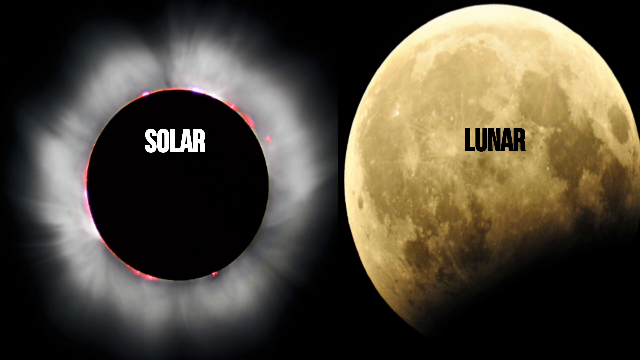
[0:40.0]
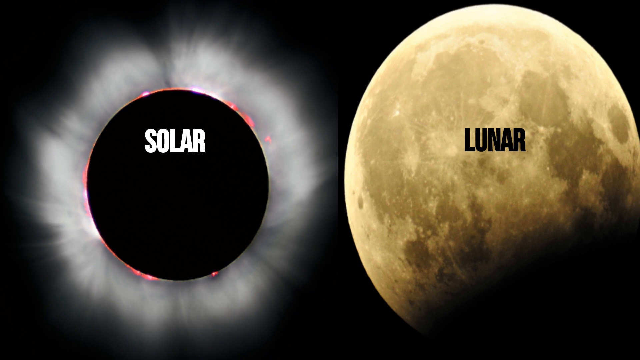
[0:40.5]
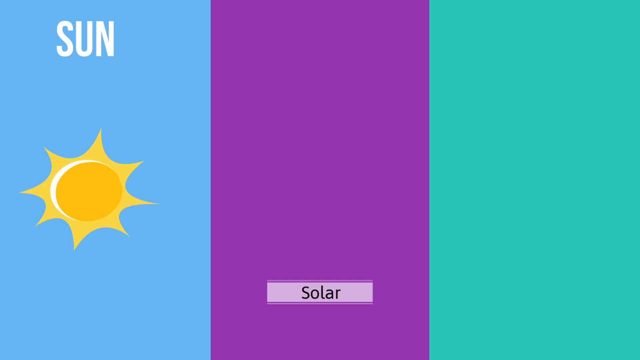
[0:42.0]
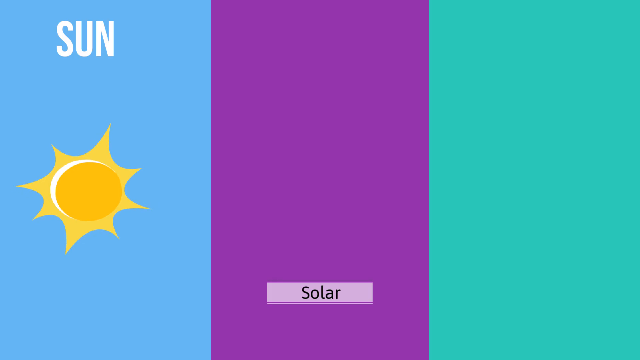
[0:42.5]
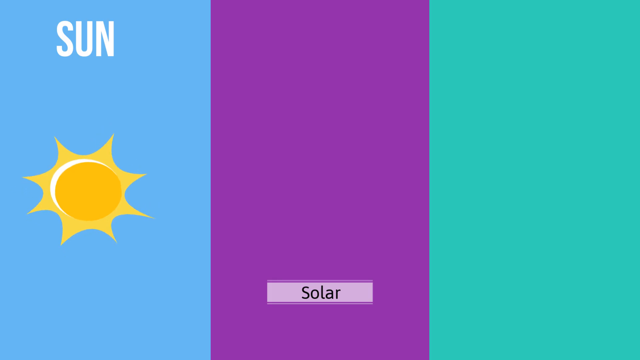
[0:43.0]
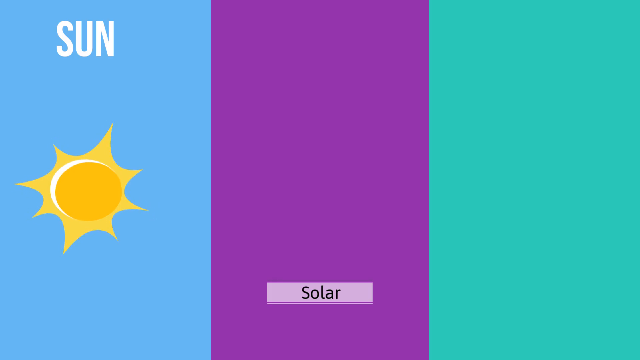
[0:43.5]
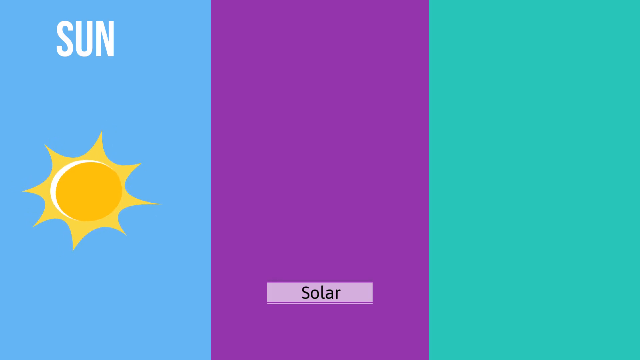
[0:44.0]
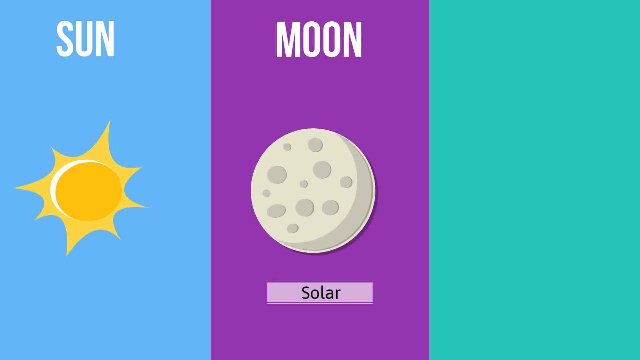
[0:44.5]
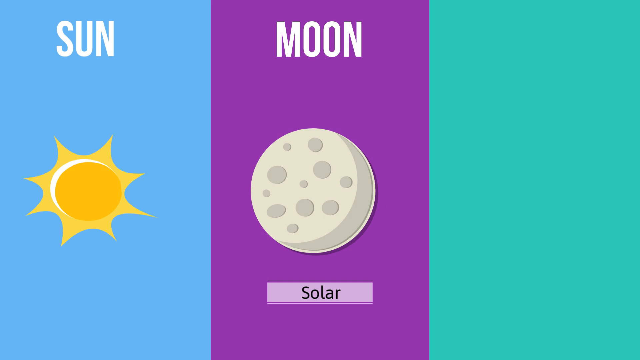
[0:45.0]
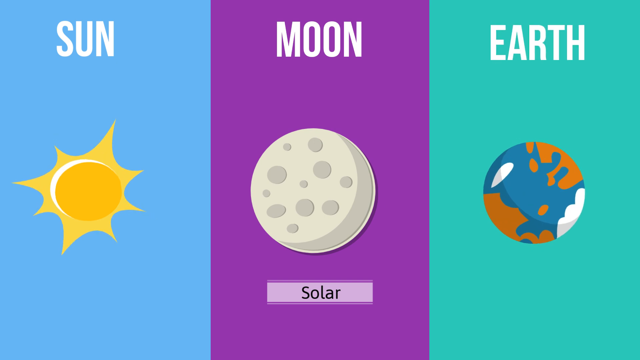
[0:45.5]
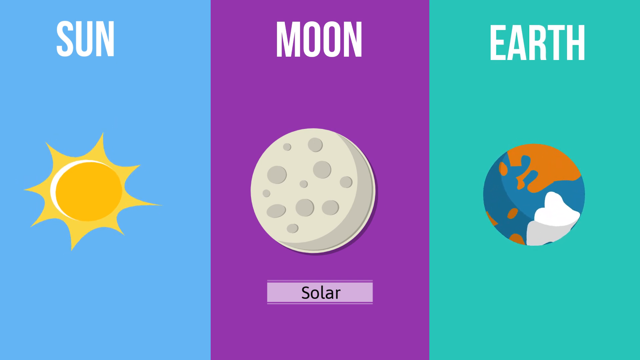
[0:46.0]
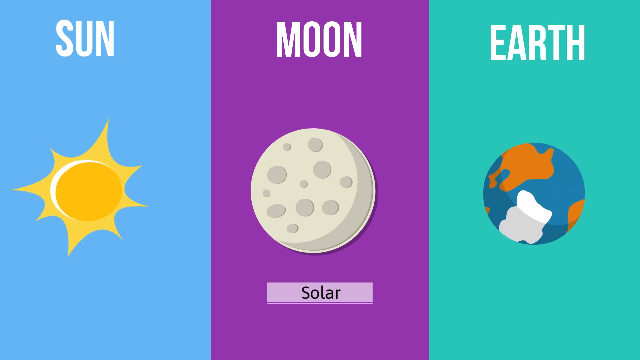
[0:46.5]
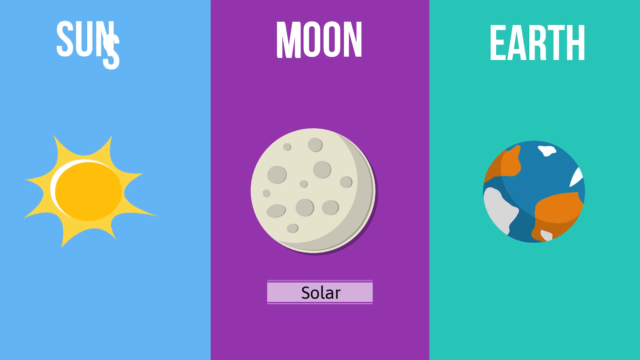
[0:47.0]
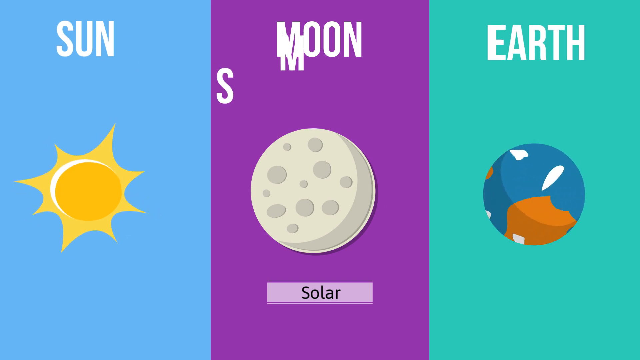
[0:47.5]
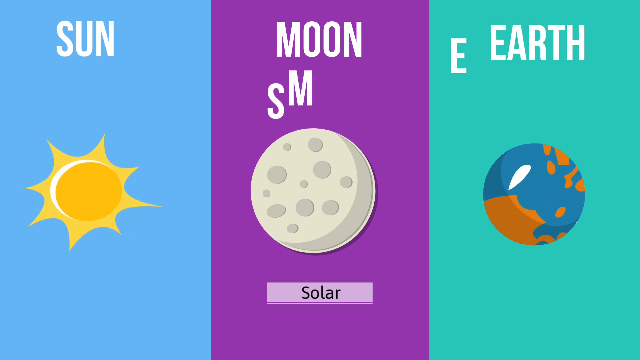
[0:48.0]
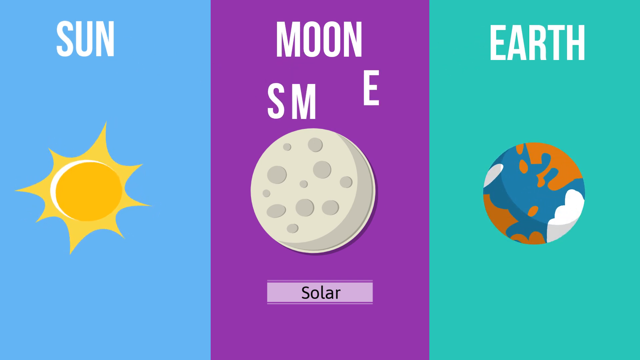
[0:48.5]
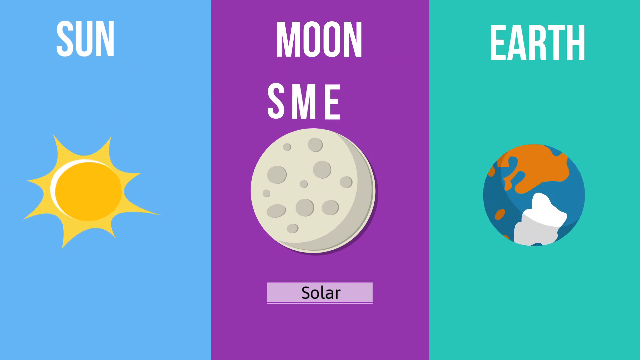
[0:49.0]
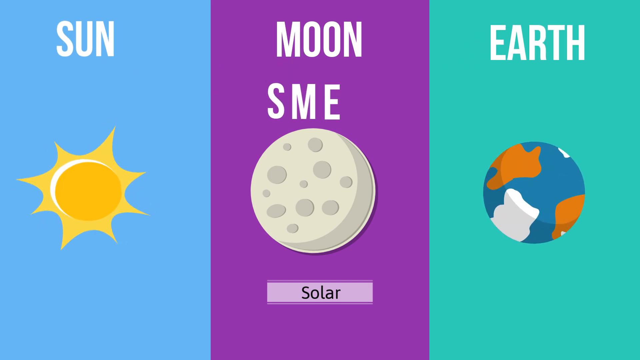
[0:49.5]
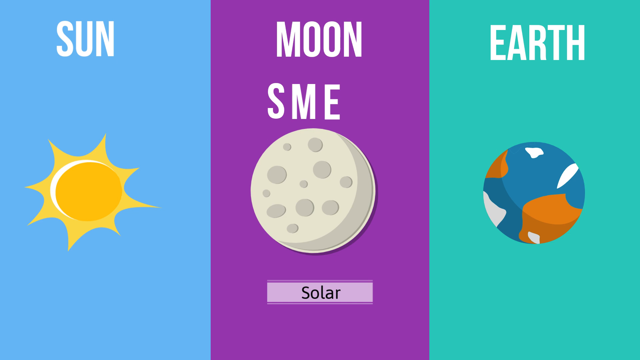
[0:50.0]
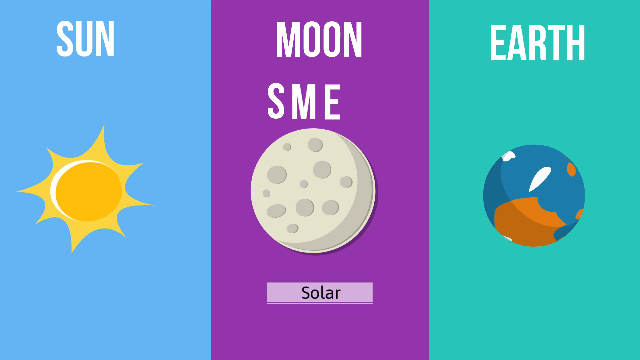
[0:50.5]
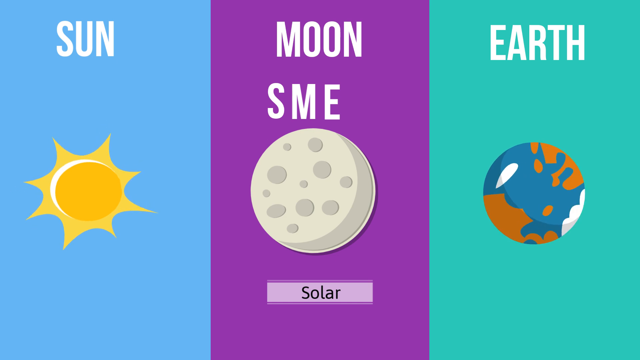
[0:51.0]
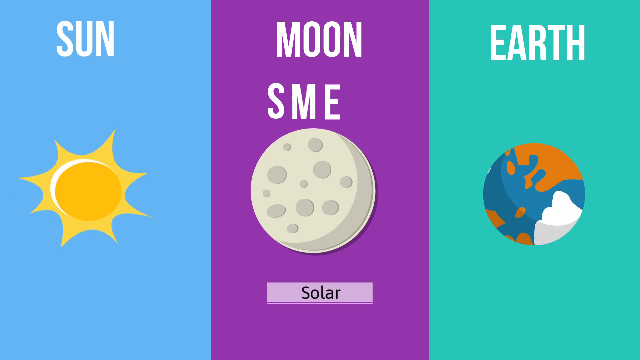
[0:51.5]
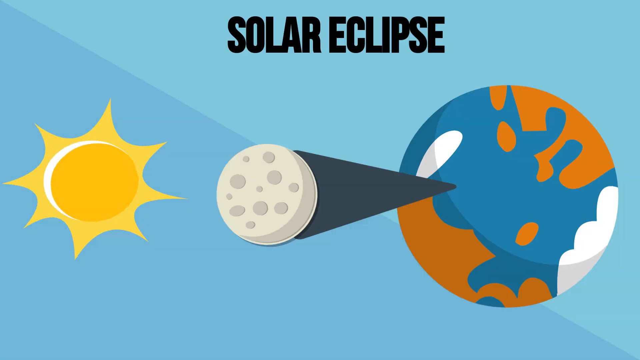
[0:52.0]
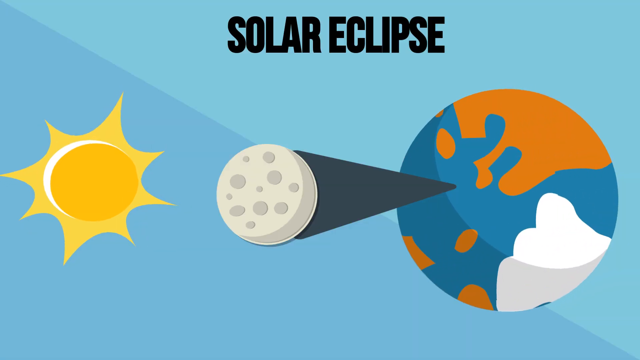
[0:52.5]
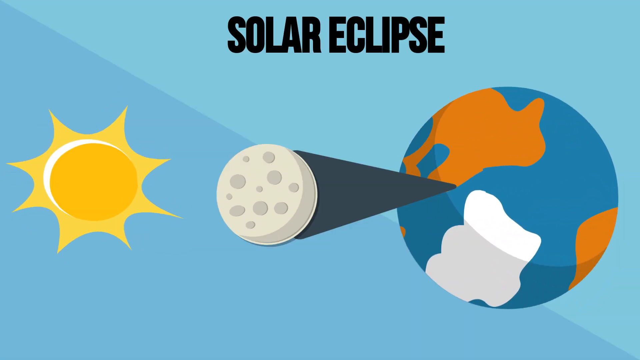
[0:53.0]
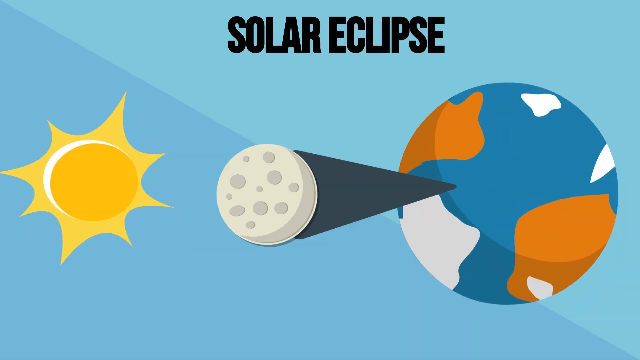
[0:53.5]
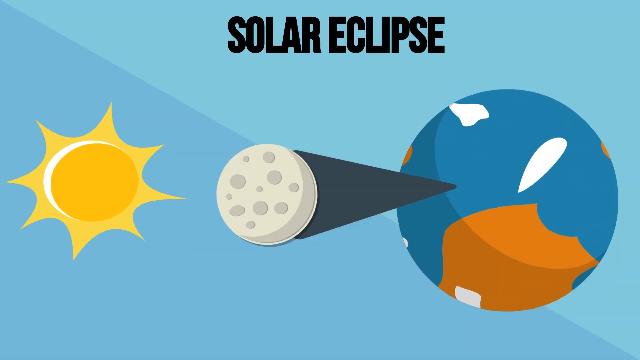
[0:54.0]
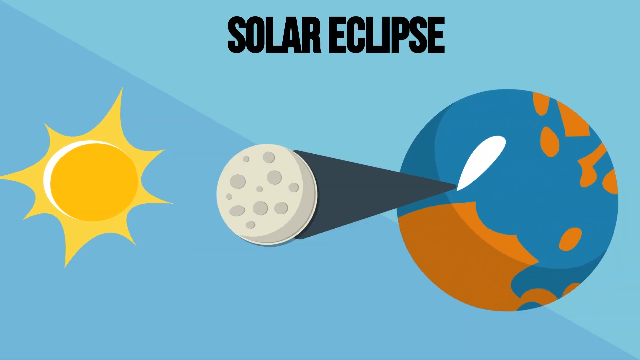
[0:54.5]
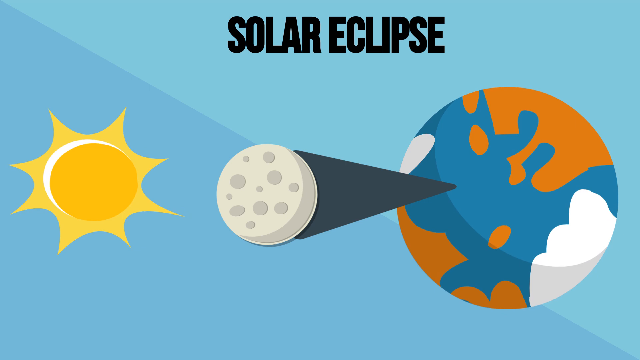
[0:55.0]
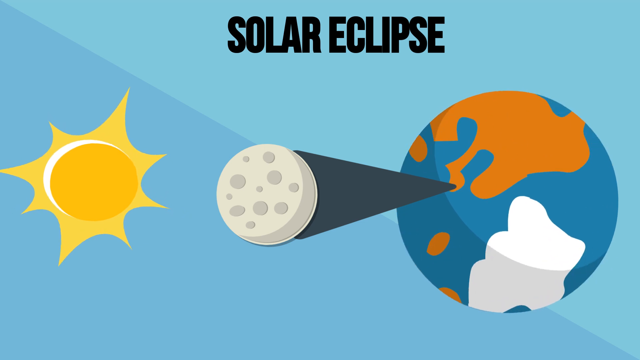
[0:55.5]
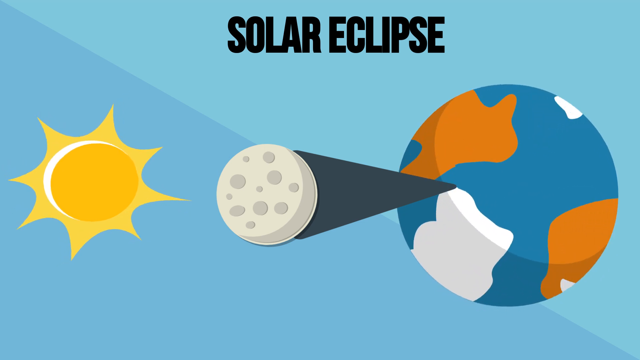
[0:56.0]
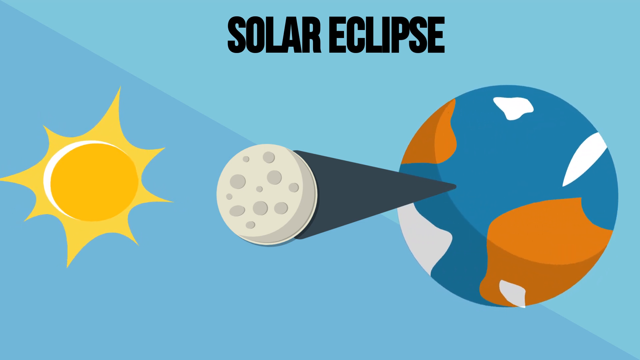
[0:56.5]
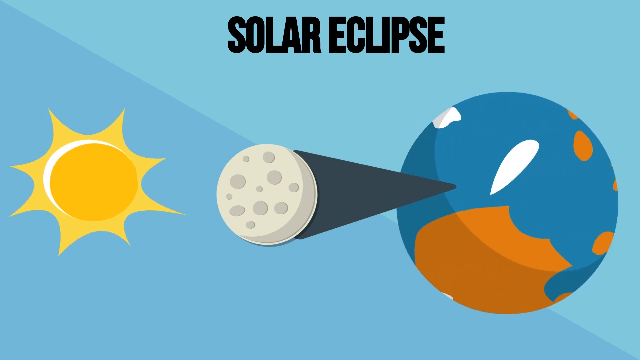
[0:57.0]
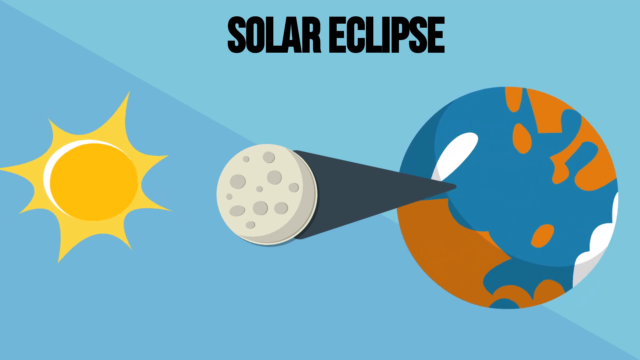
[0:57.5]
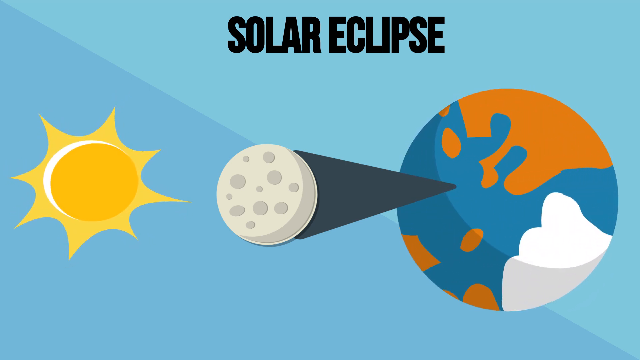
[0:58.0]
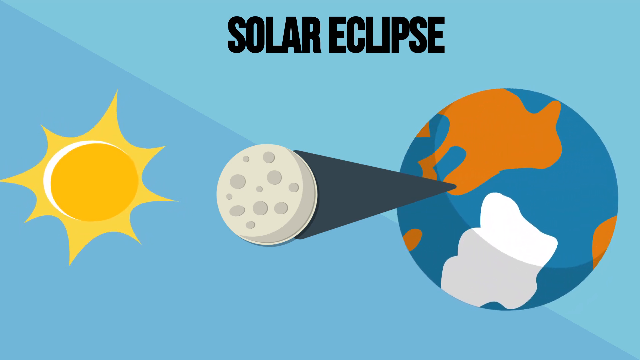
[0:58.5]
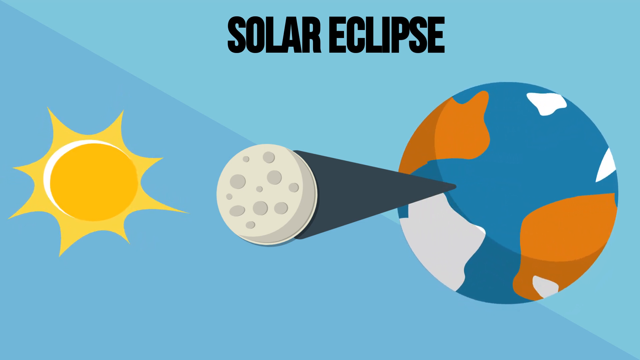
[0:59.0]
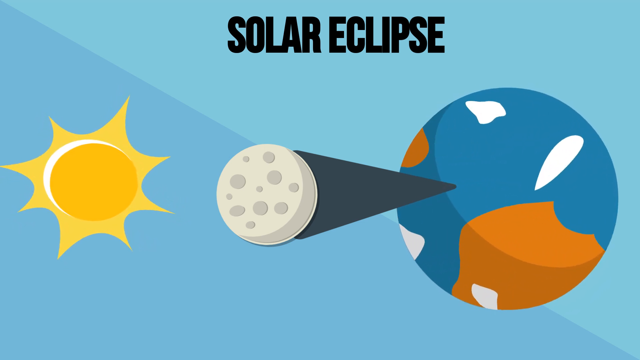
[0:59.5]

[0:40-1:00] A computer-generated rendition shows the sun blacked out and a large moon. Next comes a cartoon rendition with the sun on the left, the moon on the right, and the Earth on the far right; the eclipse is where the Earth is spinning. Another cartoon rendition follows with the sun on the left, the moon in the center, and the Earth on the right, spinning, and wherever the Earth spins is where the solar eclipse is.